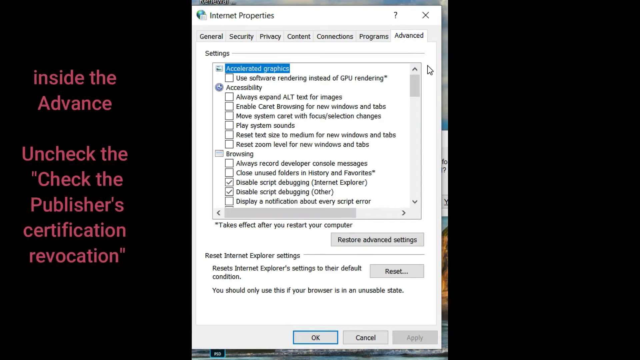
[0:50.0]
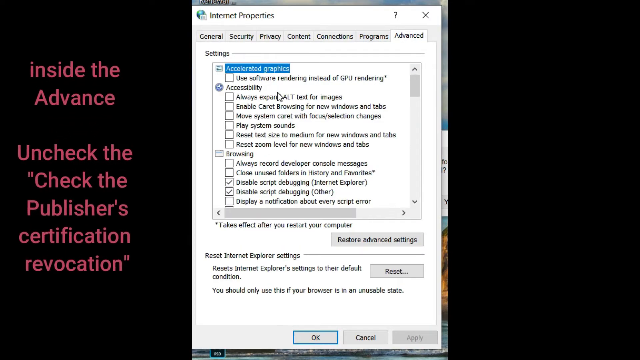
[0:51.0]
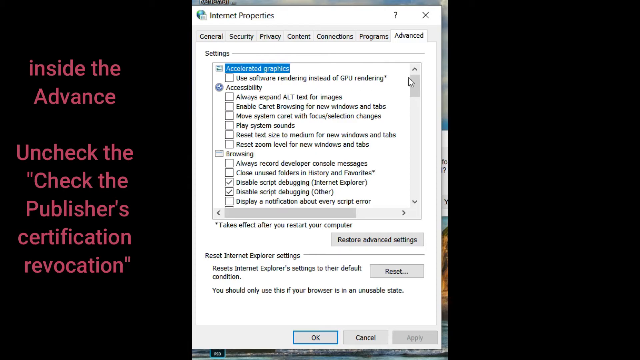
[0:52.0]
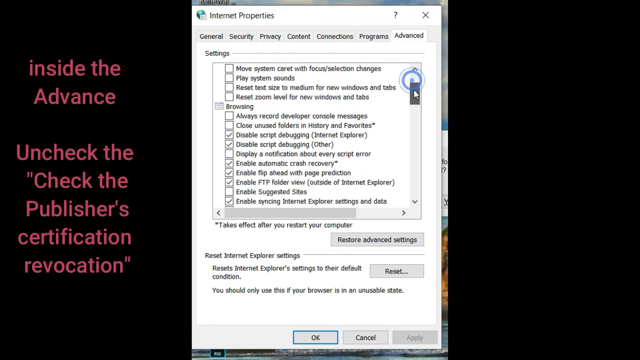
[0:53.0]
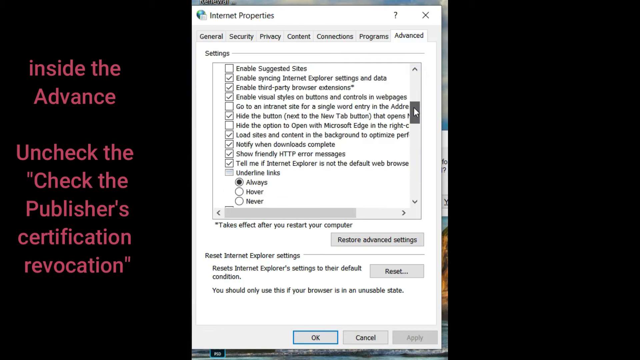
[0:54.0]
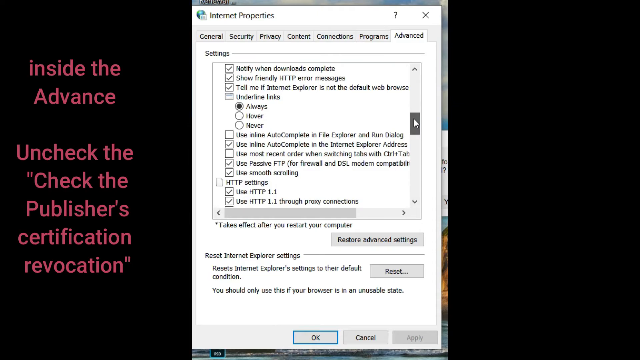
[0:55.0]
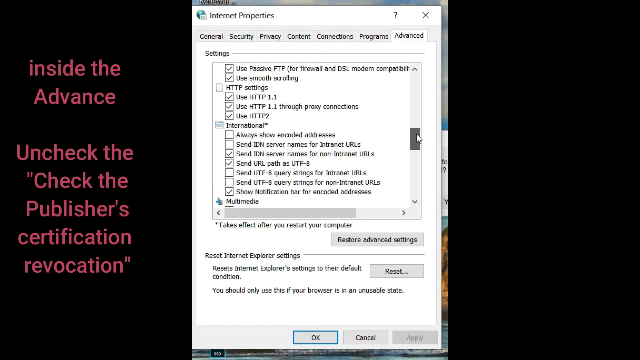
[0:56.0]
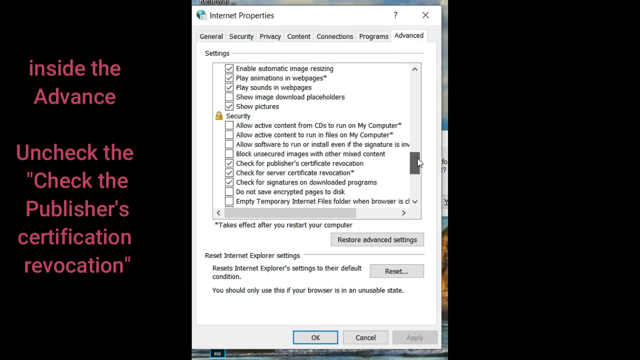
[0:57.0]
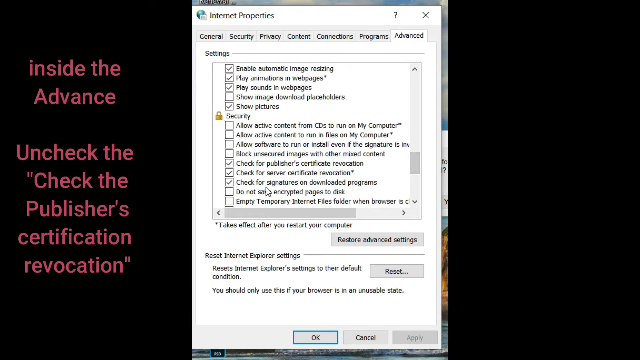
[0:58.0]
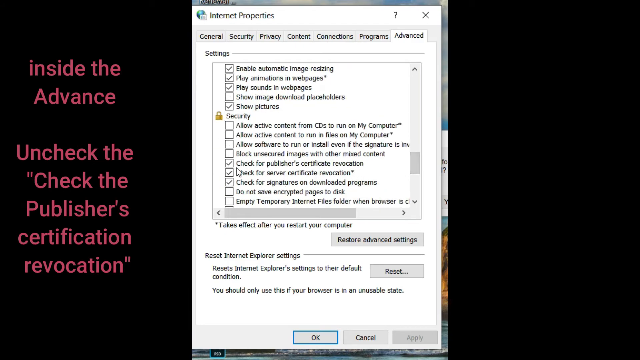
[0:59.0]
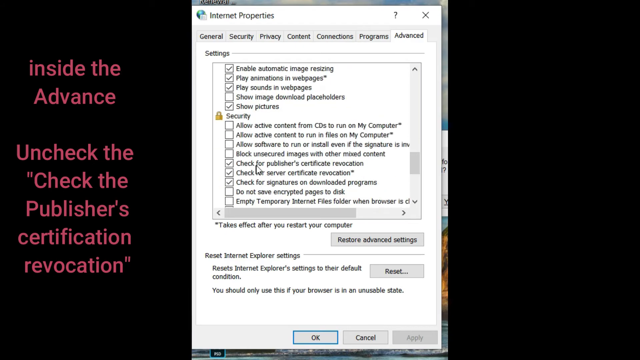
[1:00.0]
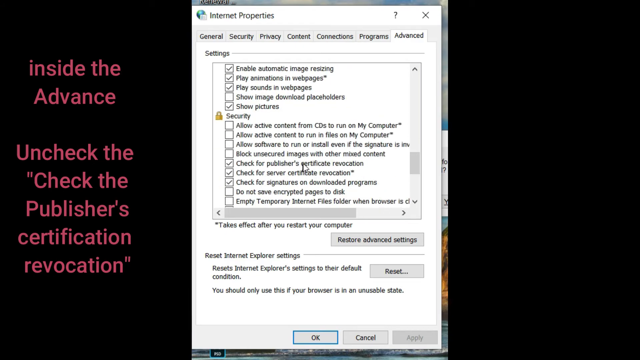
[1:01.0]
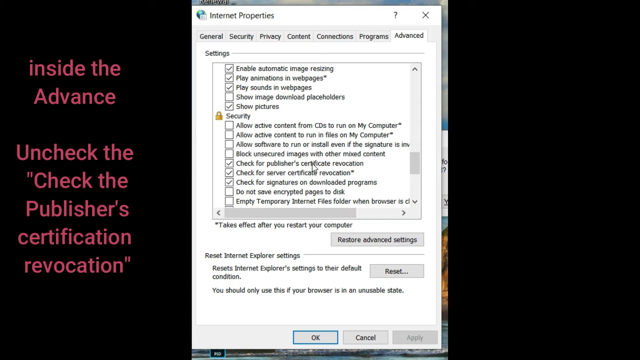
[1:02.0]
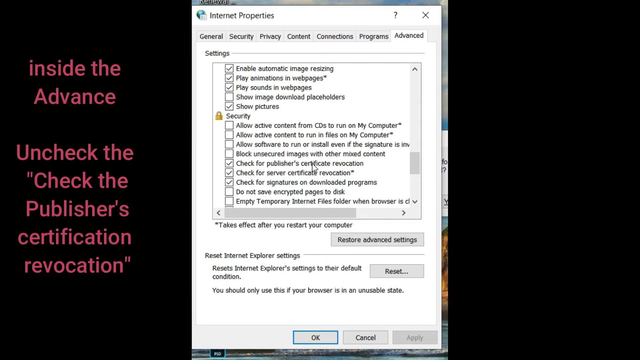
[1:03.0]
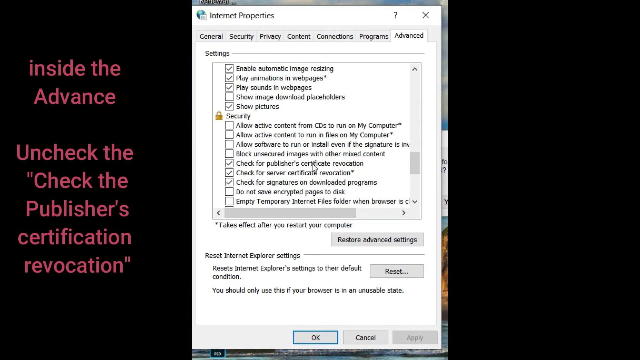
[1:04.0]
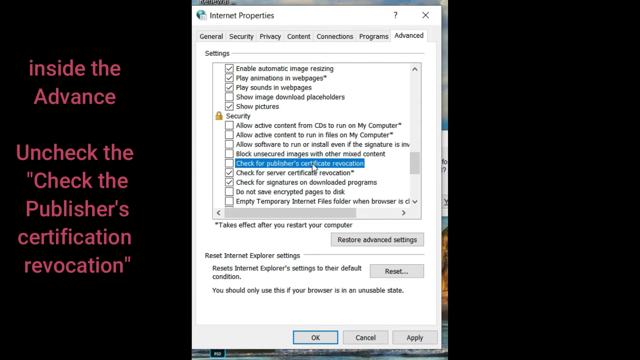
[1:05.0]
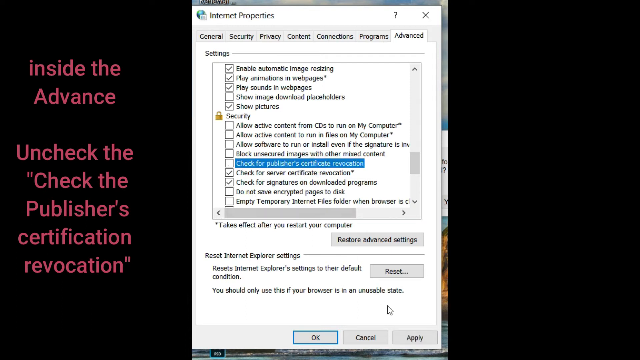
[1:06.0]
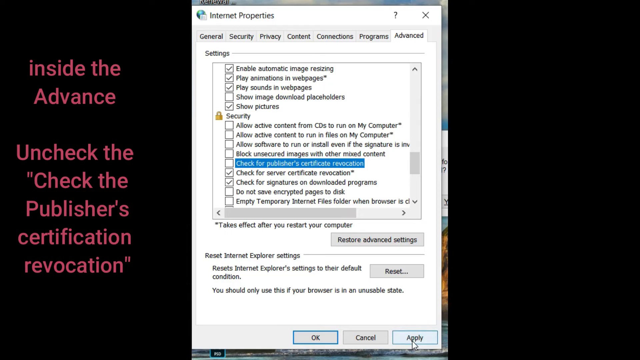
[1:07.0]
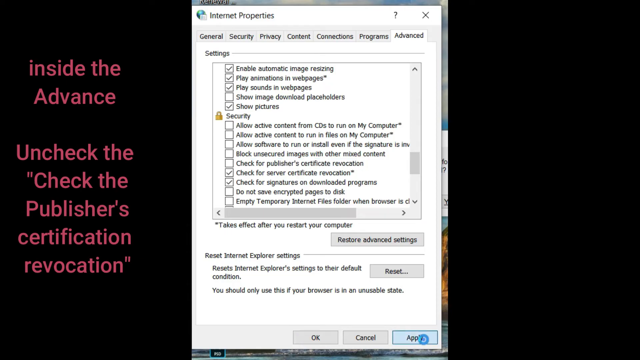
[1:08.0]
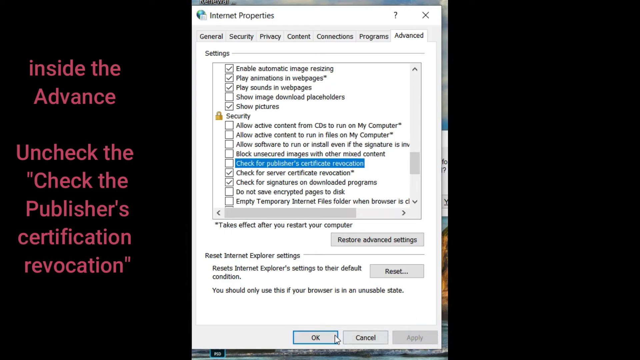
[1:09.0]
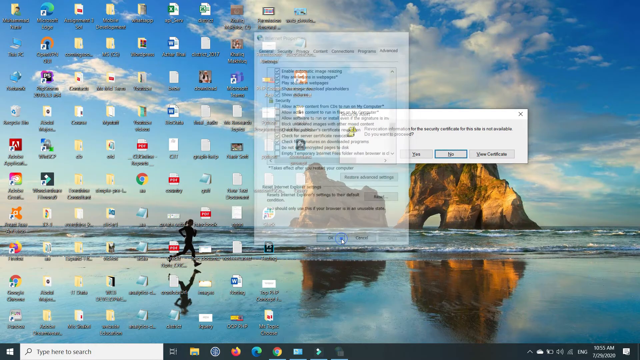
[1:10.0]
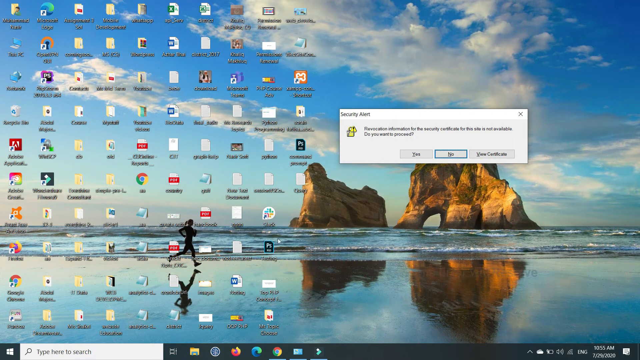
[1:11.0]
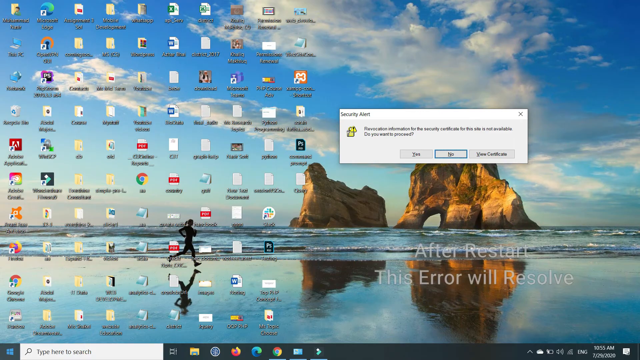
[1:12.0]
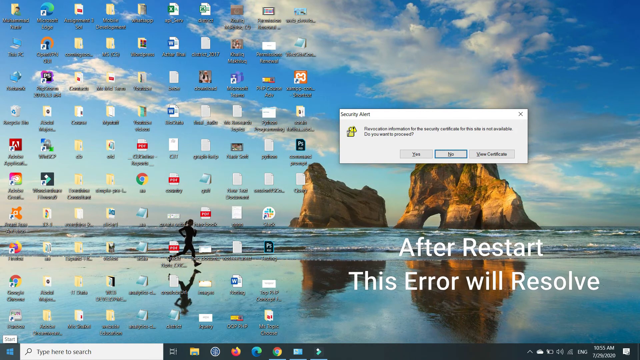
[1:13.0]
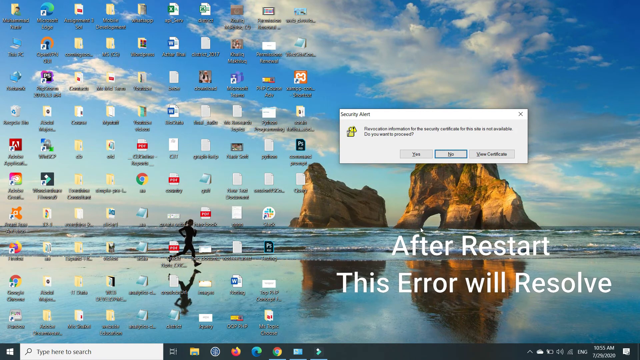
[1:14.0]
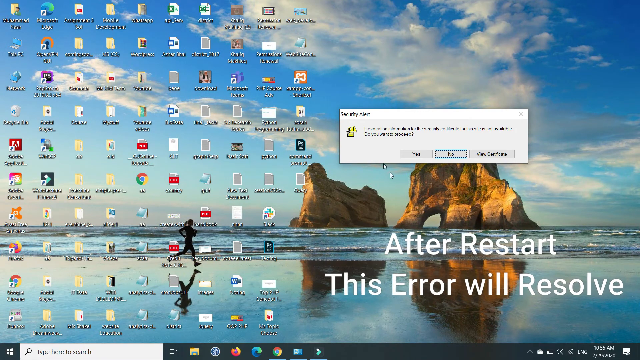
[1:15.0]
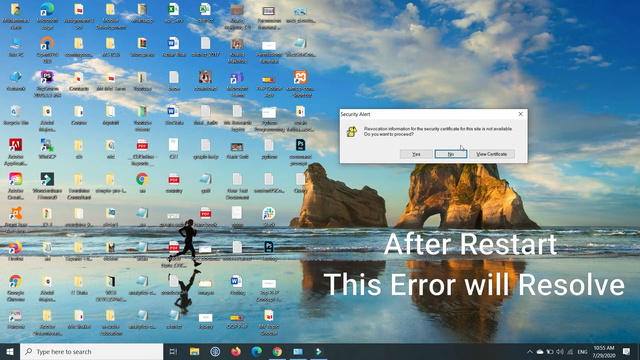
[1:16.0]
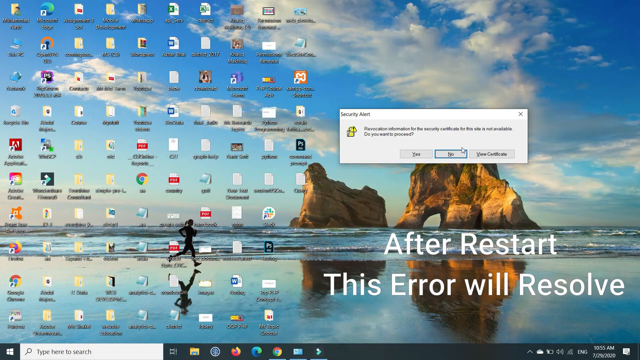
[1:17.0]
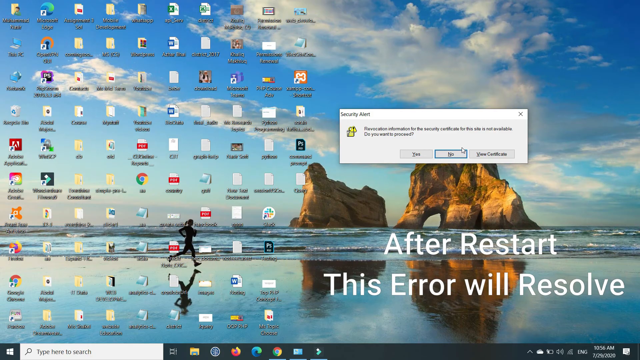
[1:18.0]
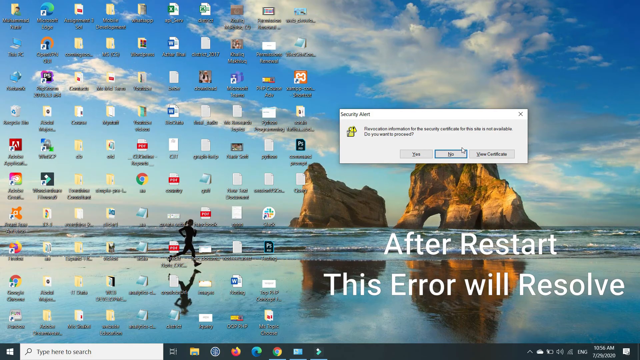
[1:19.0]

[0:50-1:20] The Internet Properties control panel is open in Windows, and a note on the left side of the screen reads "Inside the advance, uncheck the check the publisher's certification revocation." The Advanced tab is open, and the setting titled "check the publisher's certification revocation" is located, with a checkbox next to it under what seems to be the security section. The setting is unchecked and OK is clicked on the dialog box. A window then reads "After restart, this error will resolve."